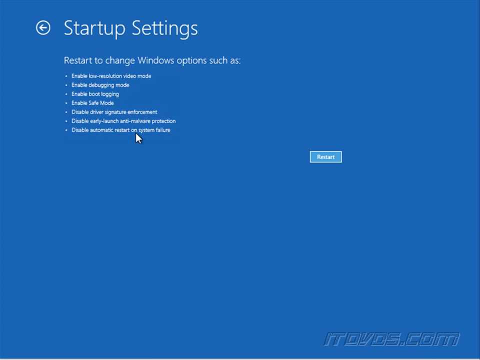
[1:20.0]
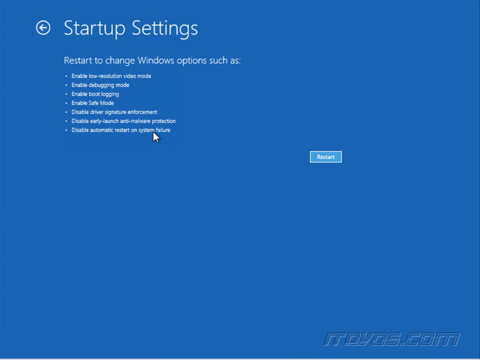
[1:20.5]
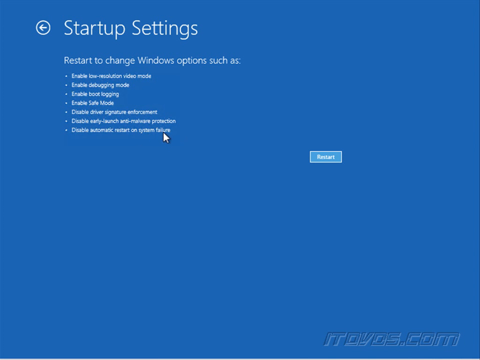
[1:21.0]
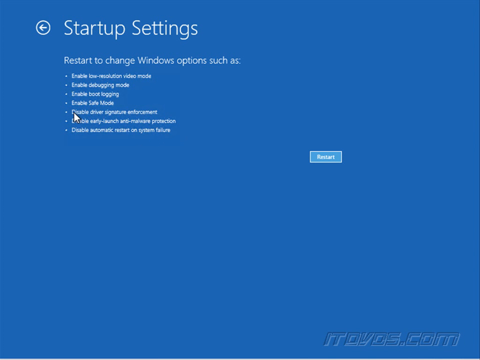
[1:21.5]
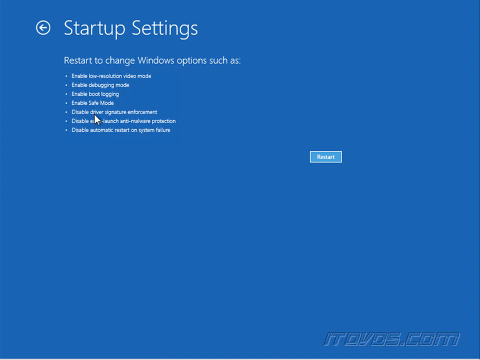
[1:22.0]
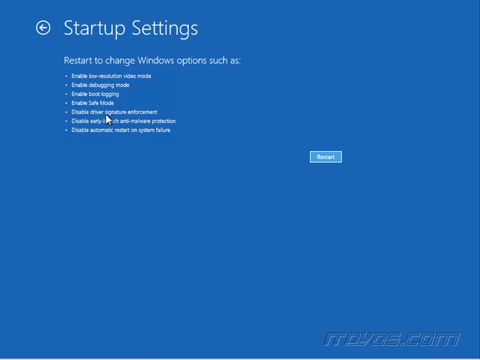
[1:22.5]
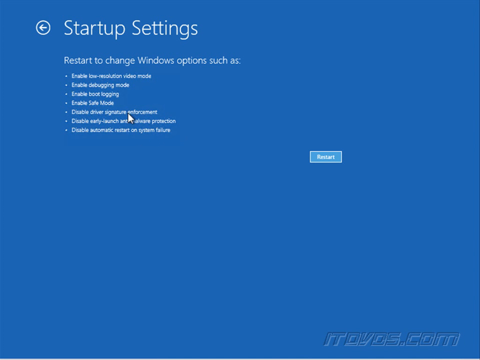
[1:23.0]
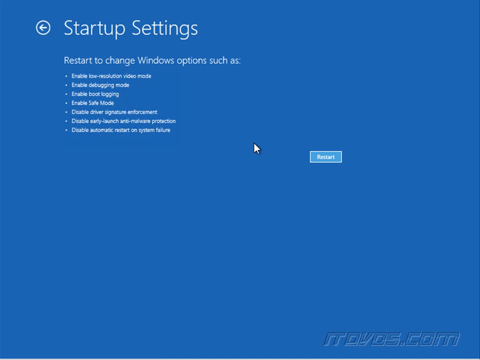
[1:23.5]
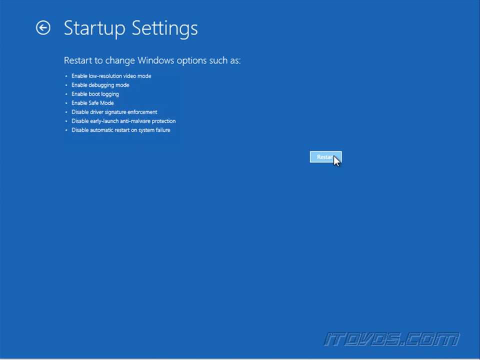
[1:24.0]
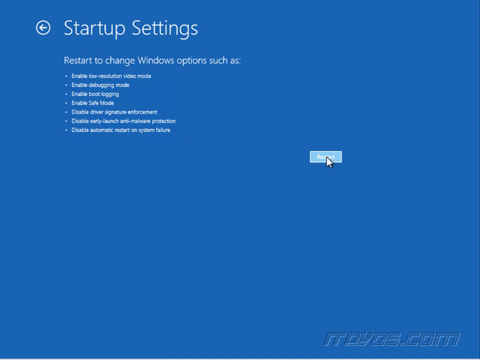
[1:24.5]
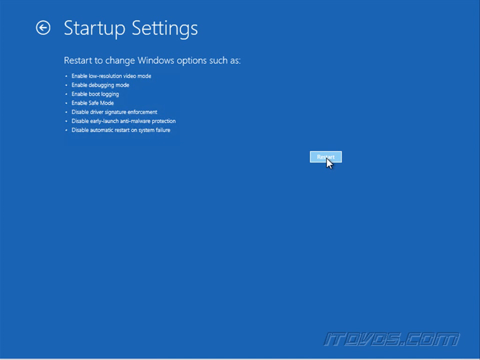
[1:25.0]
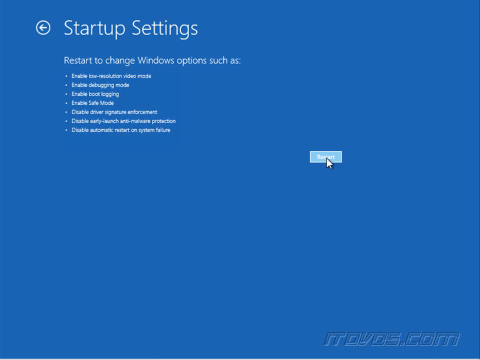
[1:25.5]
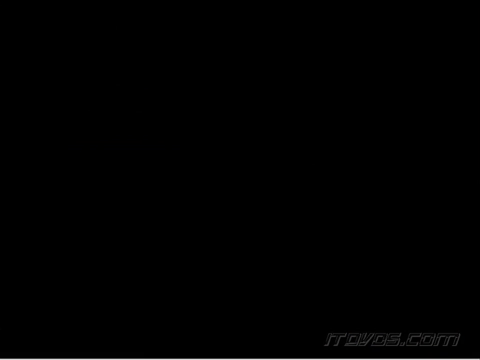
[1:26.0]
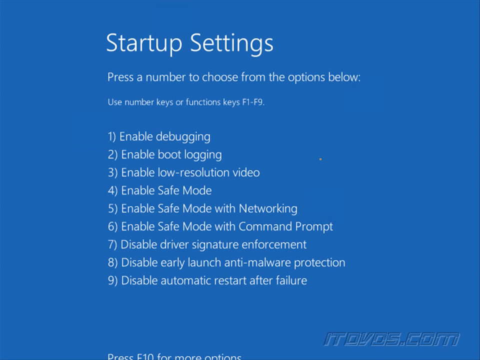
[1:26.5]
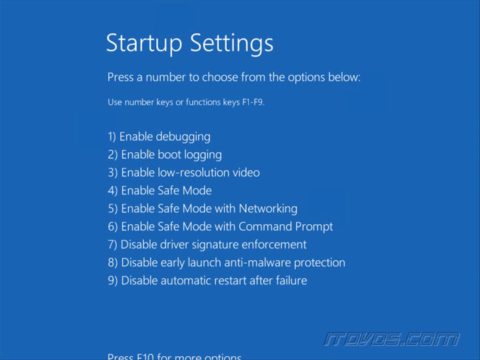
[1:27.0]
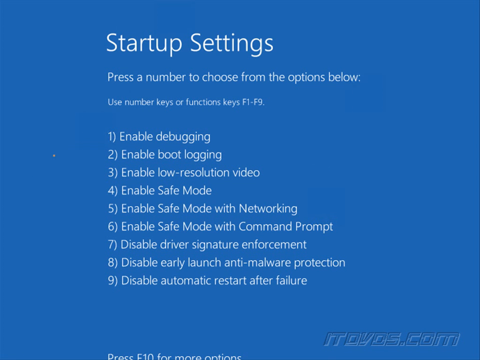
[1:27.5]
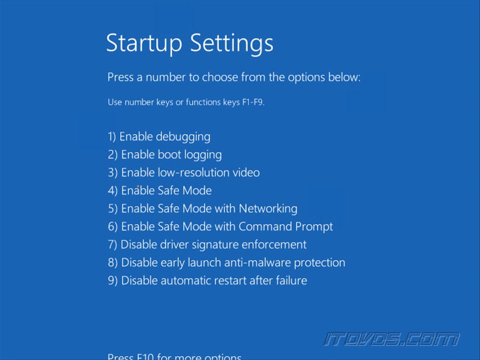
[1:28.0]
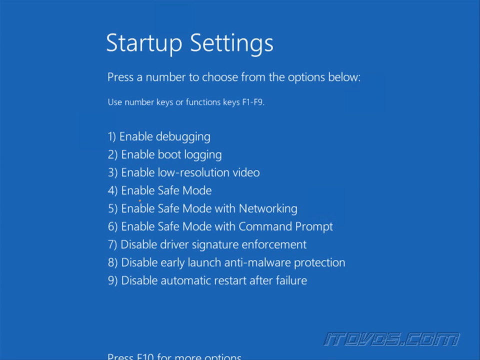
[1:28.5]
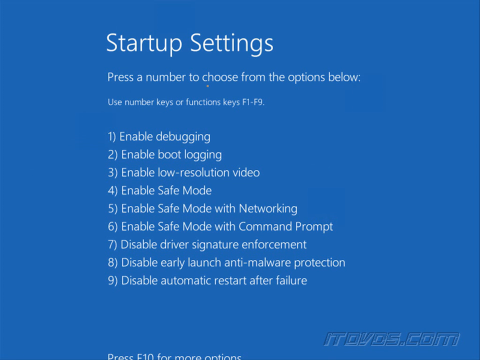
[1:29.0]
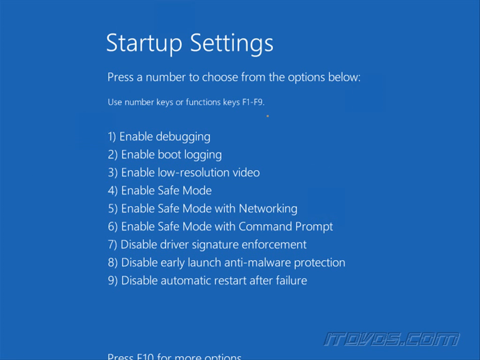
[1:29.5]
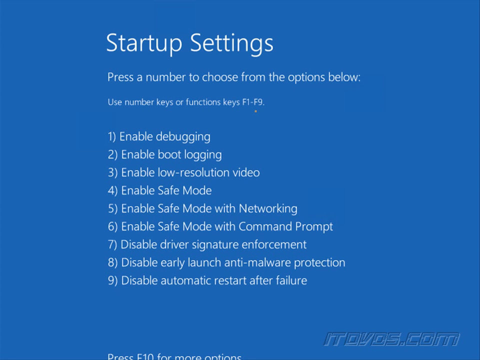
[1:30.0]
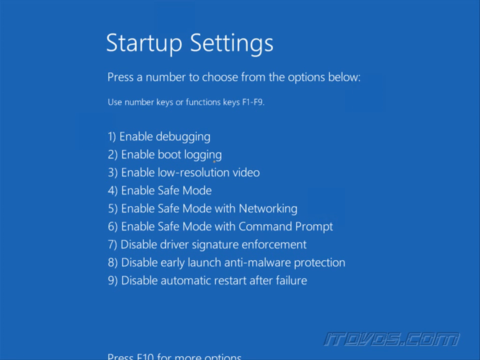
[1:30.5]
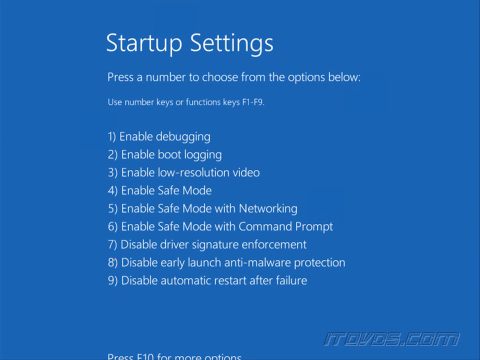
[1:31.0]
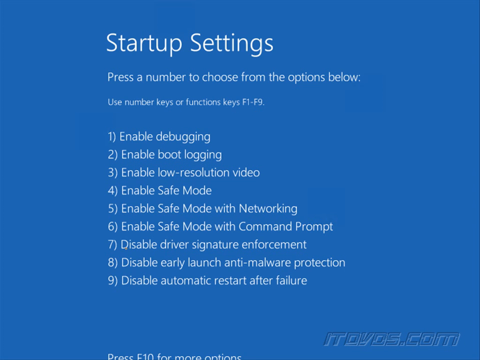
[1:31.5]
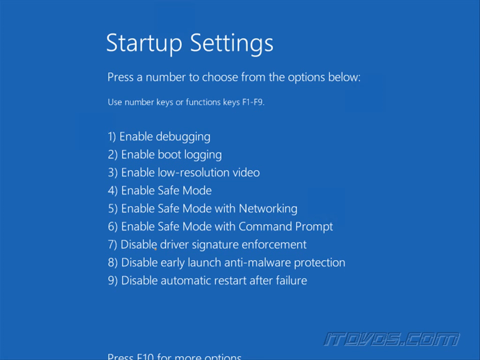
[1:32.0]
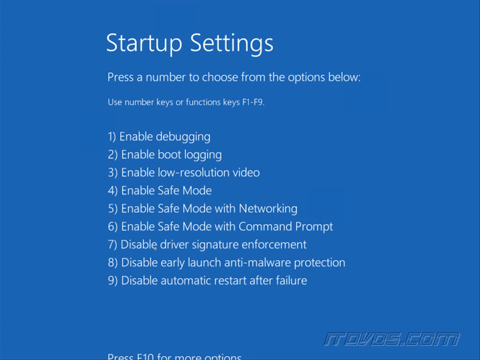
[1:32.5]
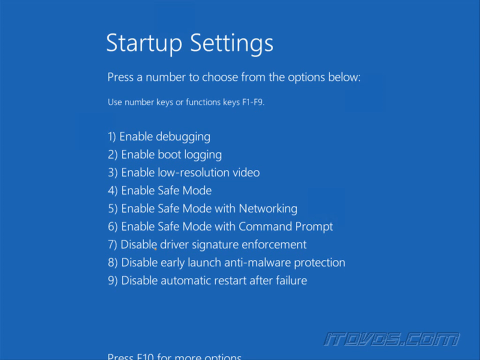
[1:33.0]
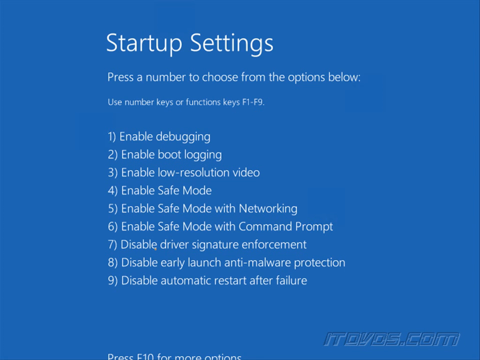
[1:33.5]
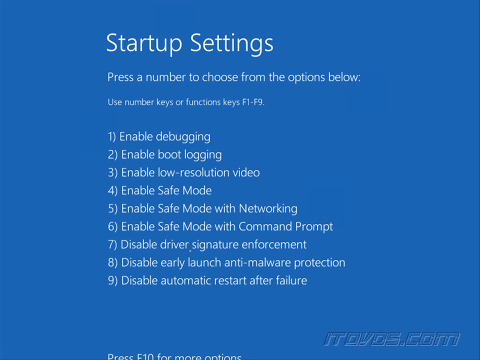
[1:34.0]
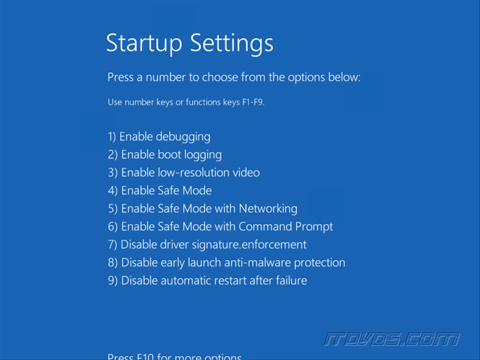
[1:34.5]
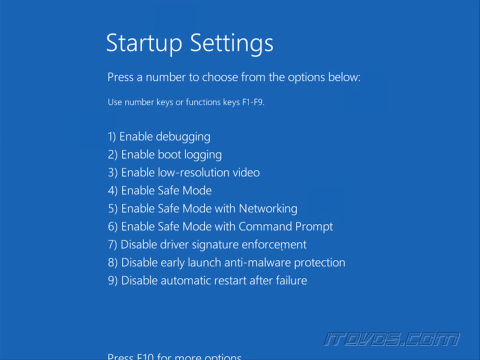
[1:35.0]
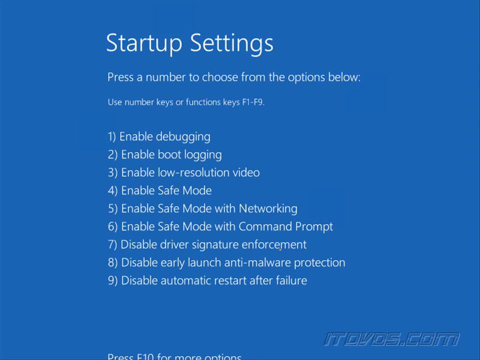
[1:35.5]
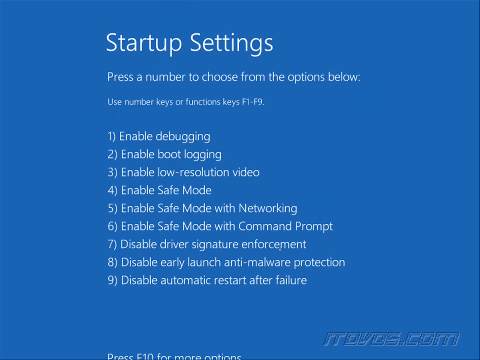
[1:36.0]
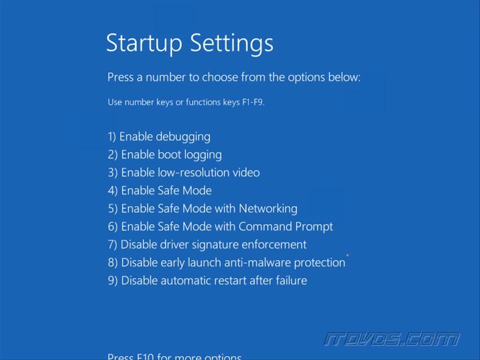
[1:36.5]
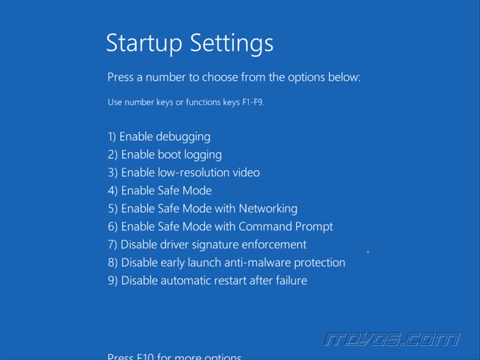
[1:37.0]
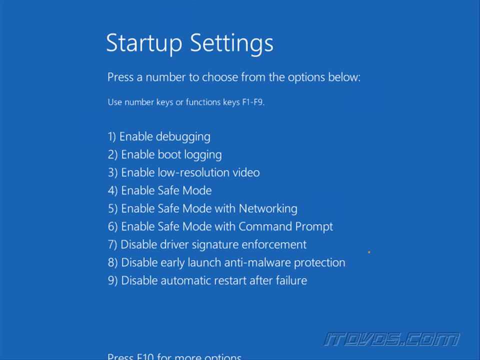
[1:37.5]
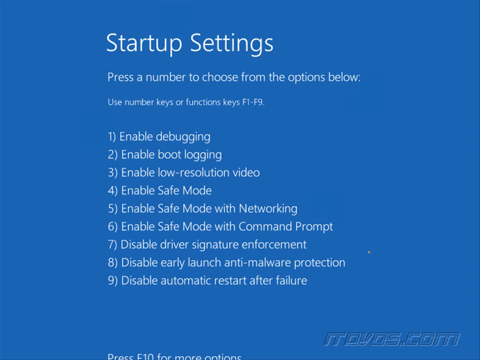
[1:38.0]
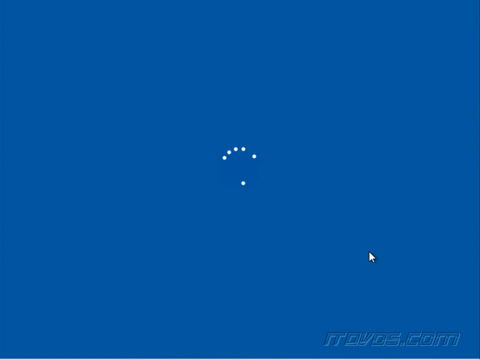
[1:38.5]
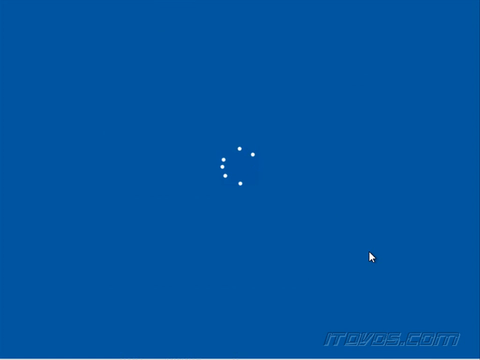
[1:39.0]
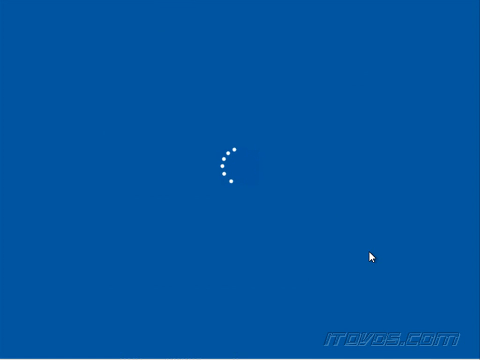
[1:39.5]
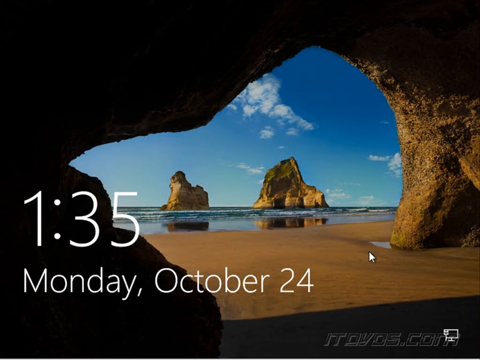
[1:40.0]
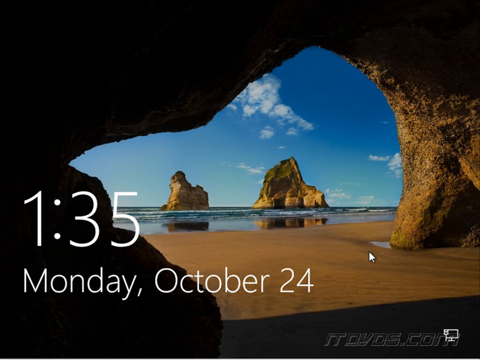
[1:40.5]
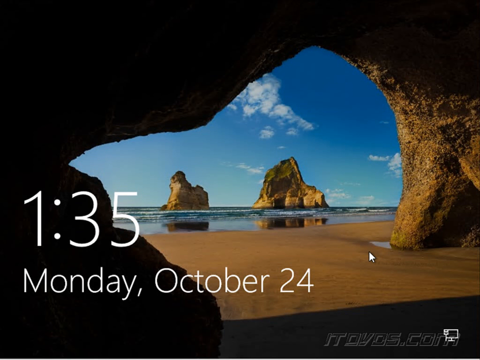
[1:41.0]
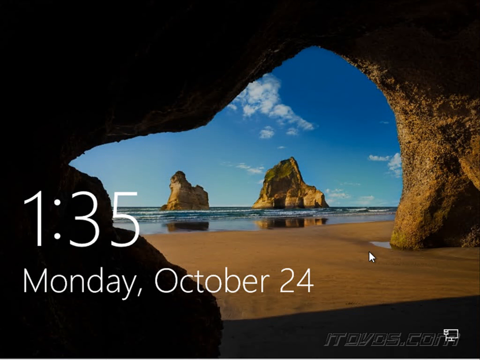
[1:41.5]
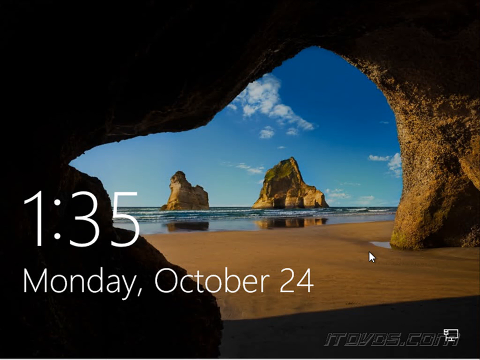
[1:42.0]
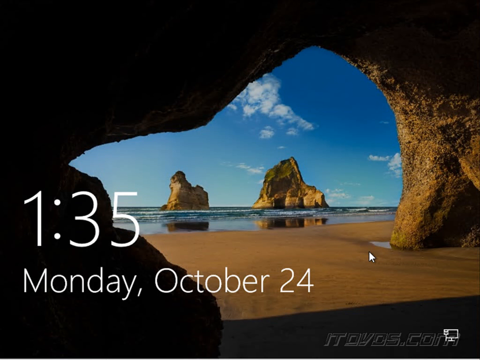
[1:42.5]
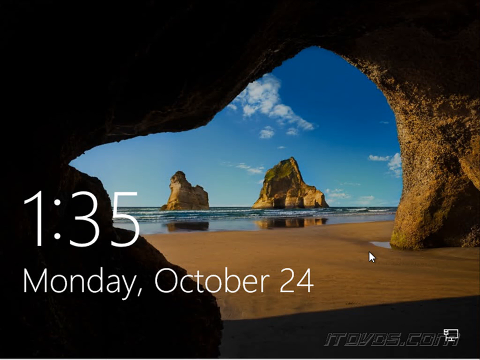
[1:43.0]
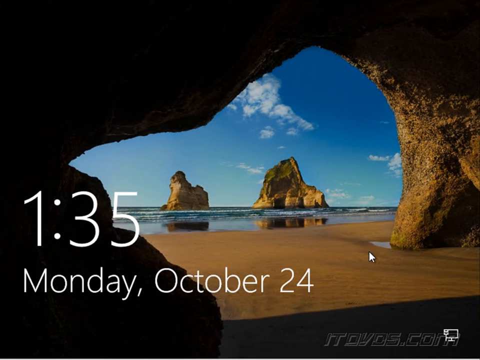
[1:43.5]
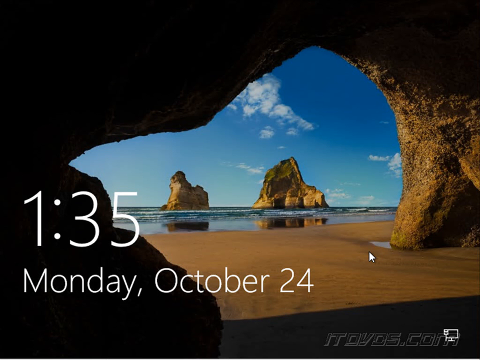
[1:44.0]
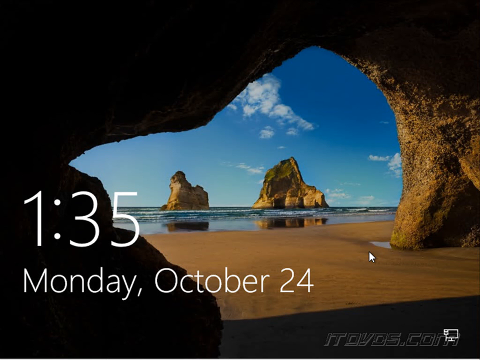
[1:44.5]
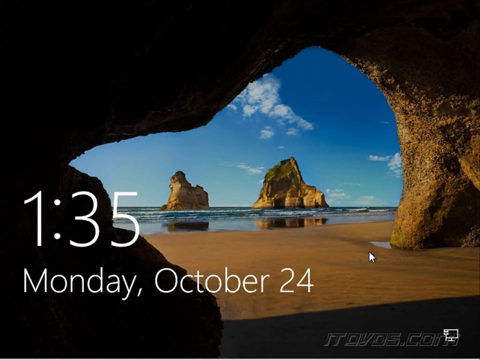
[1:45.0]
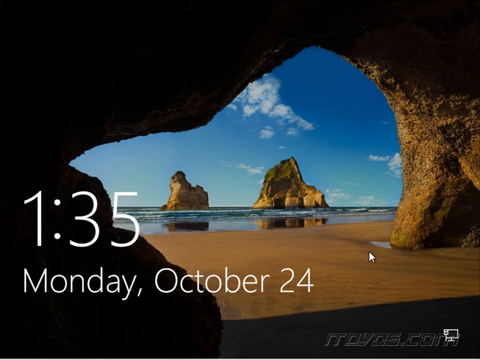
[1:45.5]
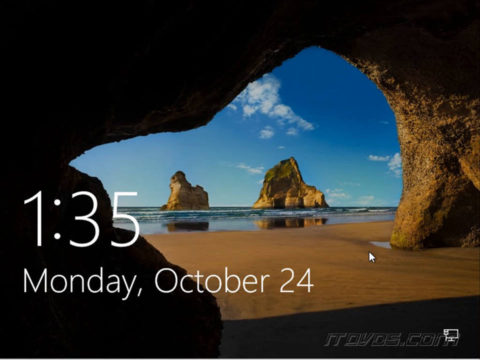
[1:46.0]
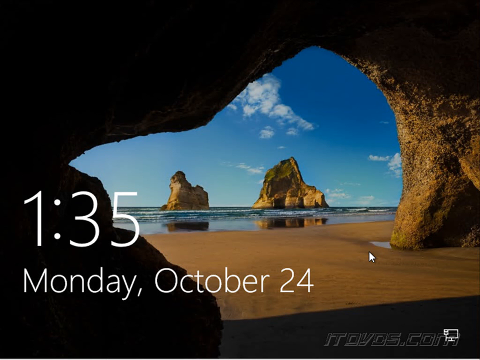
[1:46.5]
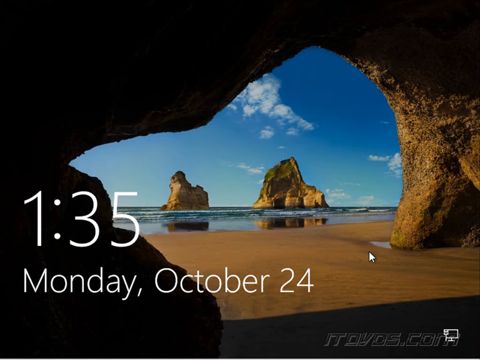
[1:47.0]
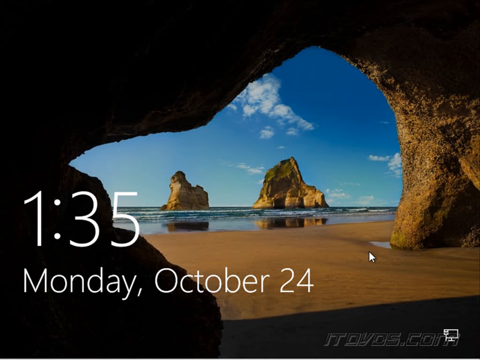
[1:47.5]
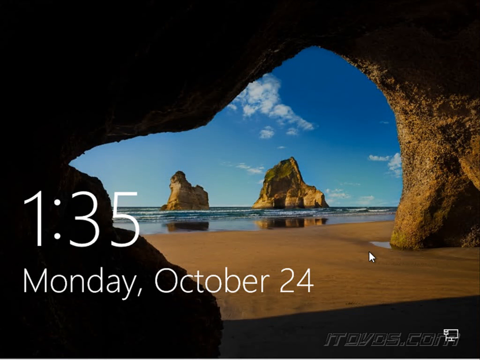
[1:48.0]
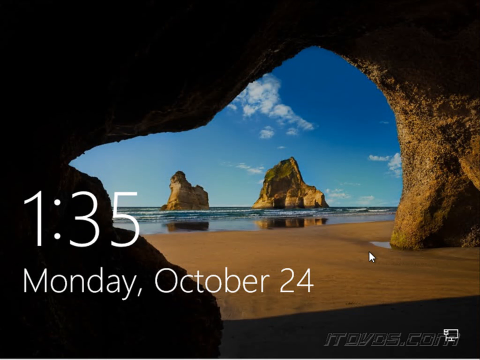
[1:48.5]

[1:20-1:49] Option number one says "enable debugging." On the other screen there is a wallpaper of an ocean and a cave, and the time shown is 25 minutes to 2. The laptop runs Windows 7. The user has pressed restart and is given options including enabling boot logging, "enable safe mode" and "enable safe mode networking." A website appears on the screen saver. The options are tied to number or function keys from F1 to F9, and at the top it reads "startup settings."